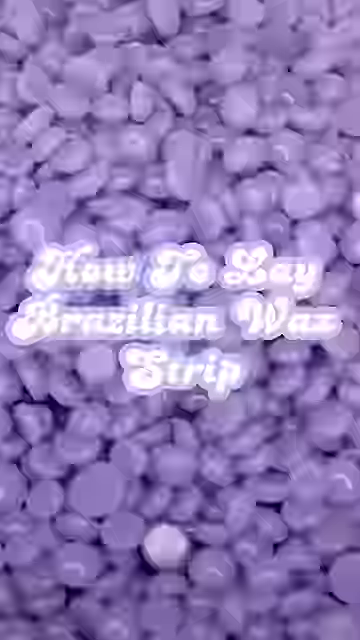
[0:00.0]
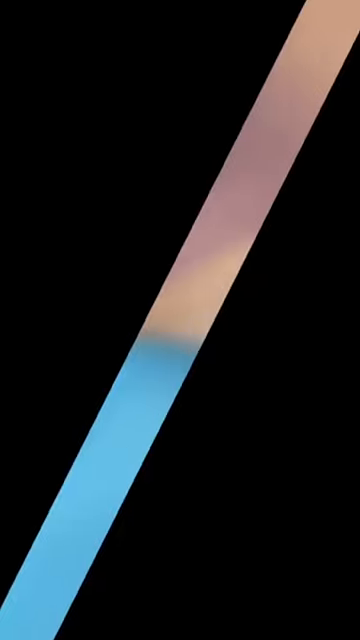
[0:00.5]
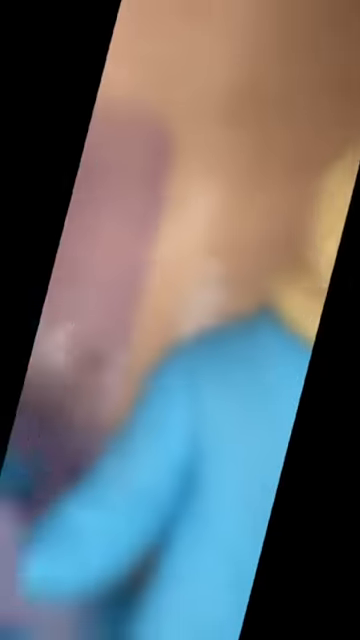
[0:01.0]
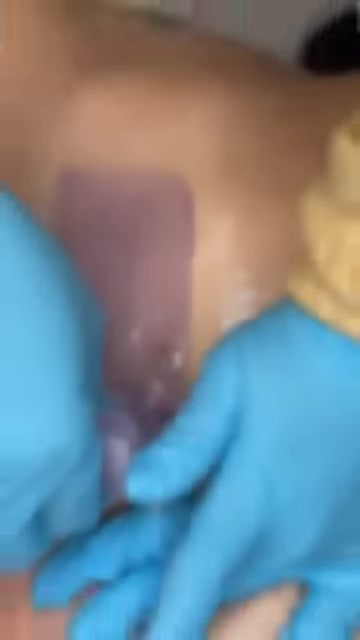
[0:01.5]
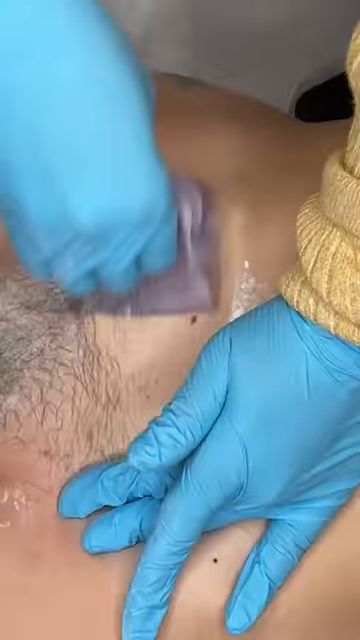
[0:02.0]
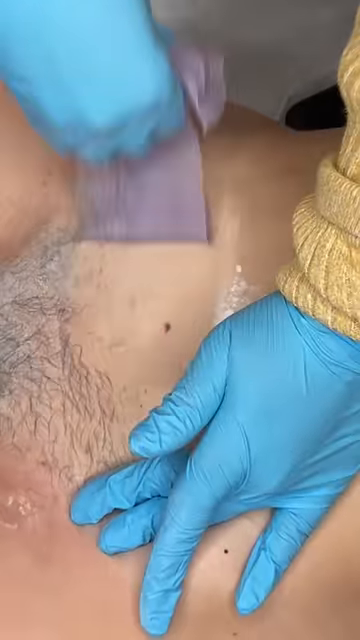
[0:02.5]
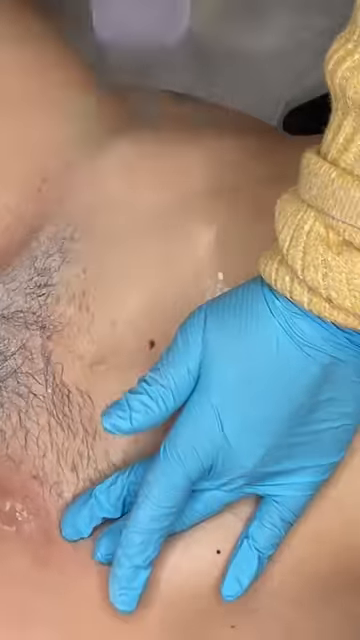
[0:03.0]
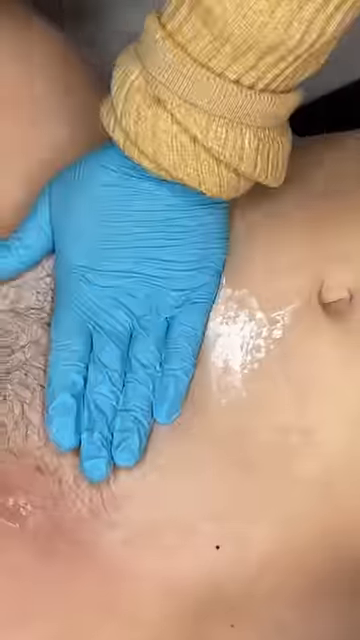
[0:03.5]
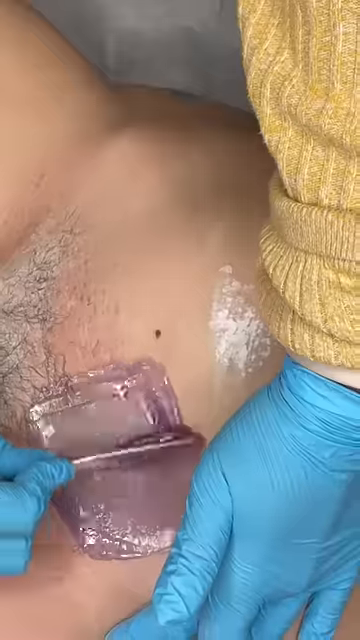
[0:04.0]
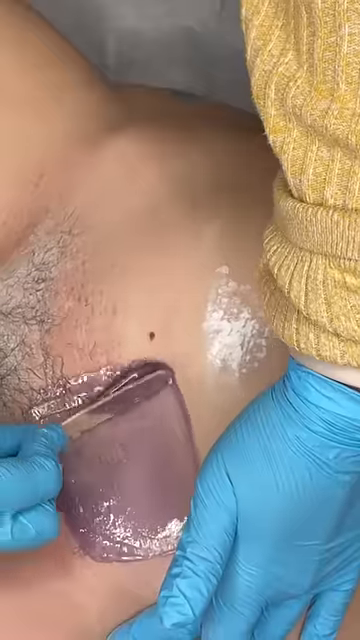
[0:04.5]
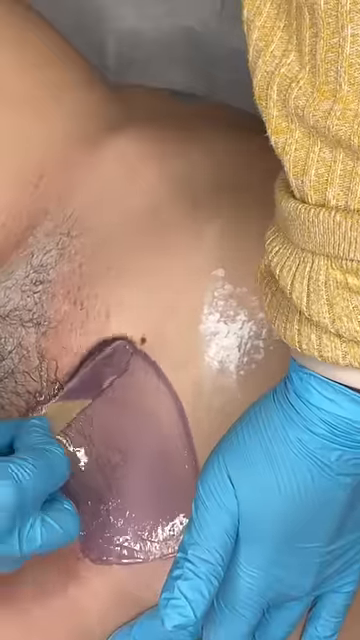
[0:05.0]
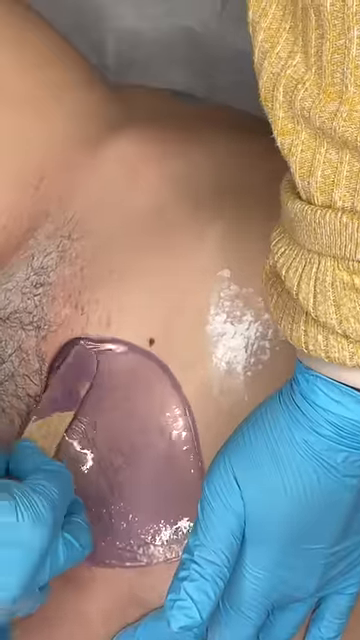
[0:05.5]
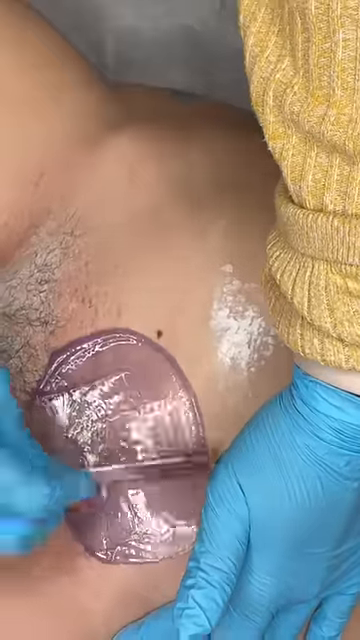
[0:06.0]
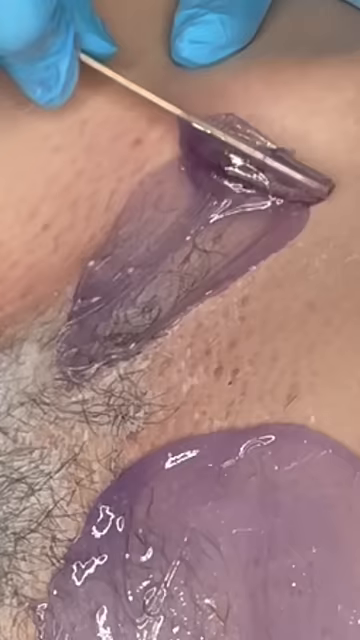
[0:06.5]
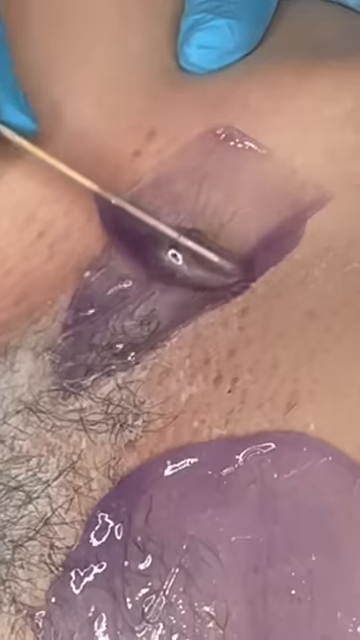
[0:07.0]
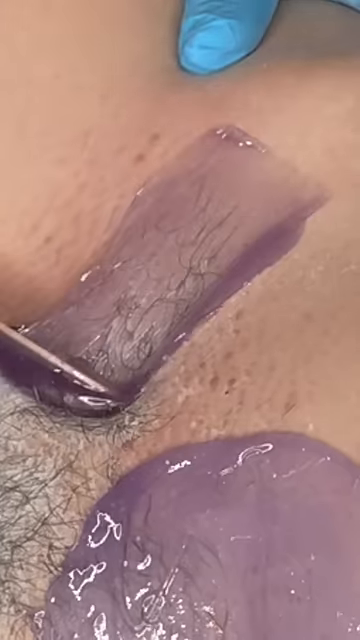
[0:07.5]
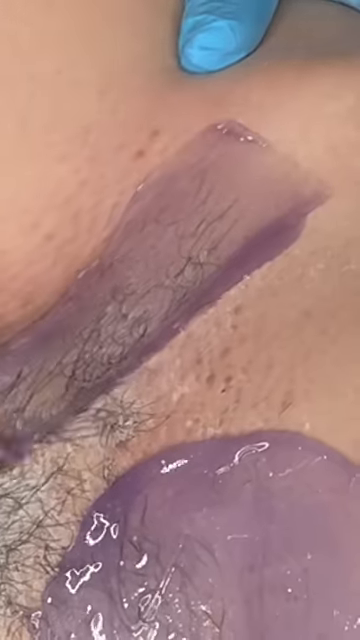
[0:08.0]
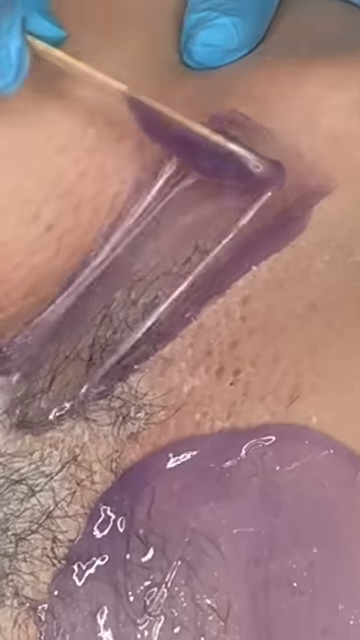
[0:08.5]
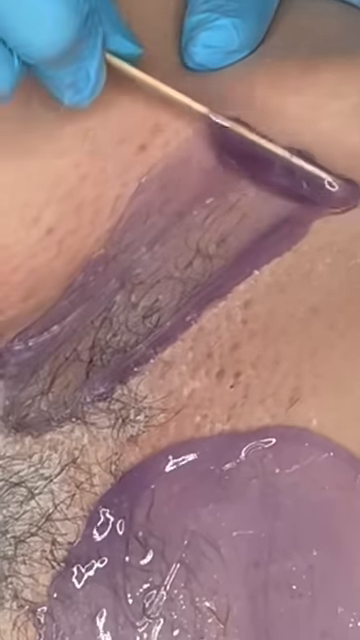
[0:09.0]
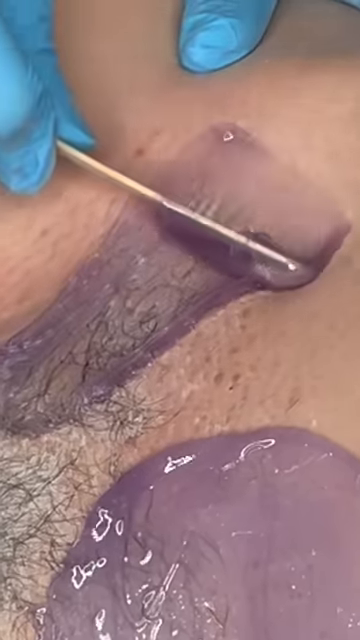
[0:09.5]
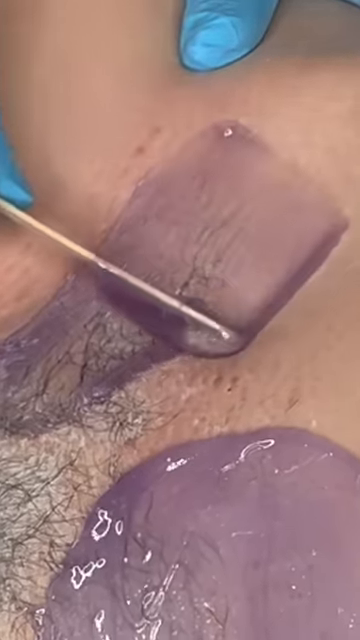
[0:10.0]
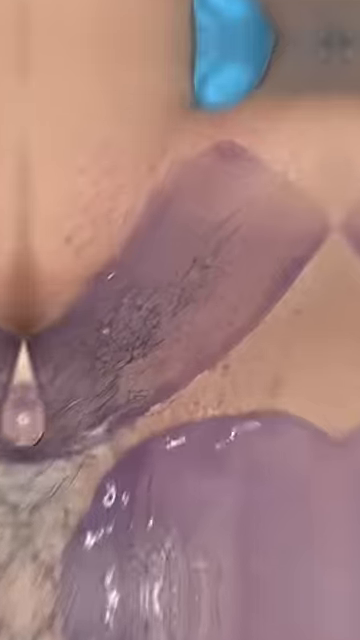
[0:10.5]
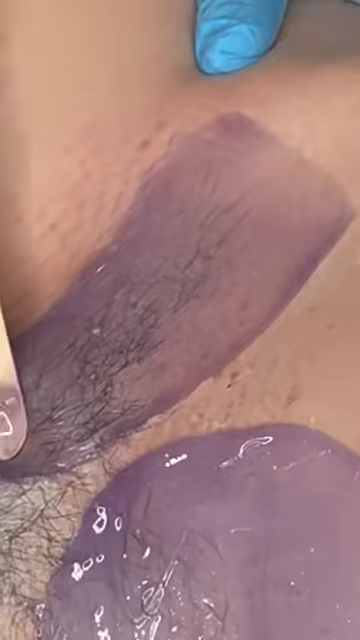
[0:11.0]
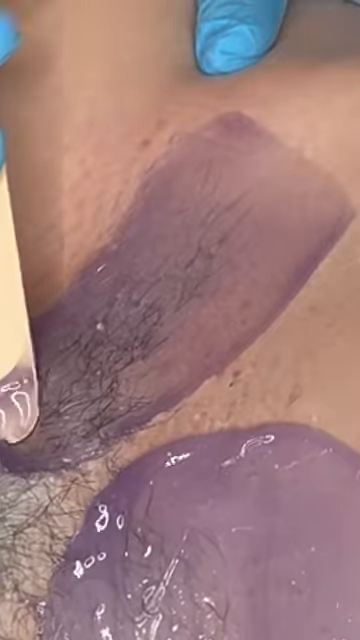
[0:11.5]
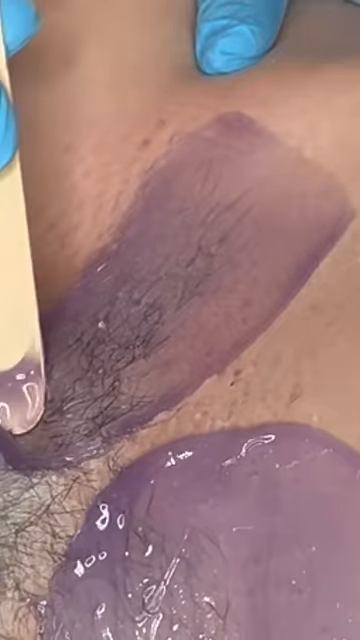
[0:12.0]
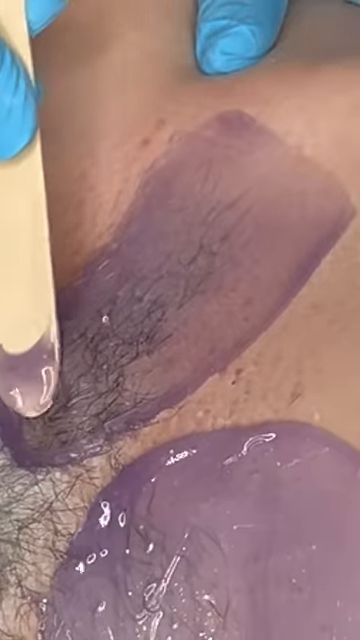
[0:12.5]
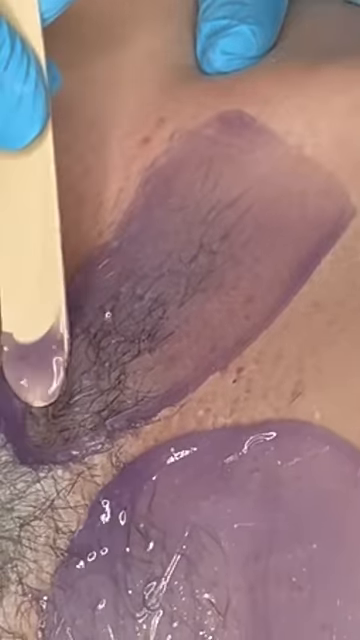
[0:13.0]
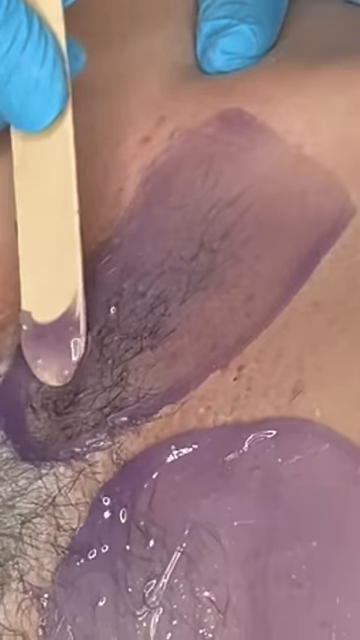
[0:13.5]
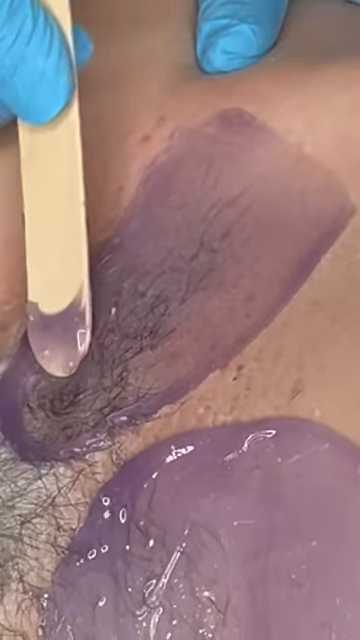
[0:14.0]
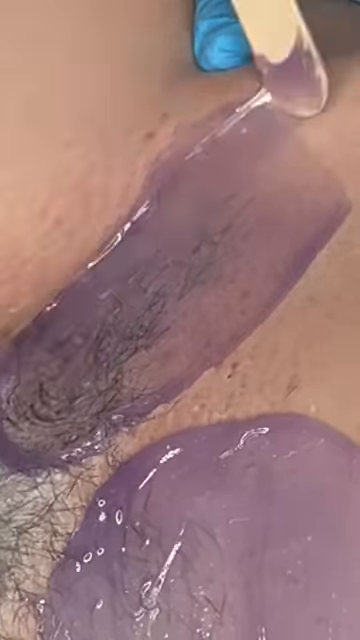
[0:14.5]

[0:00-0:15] The opening shows the person doing the wax, who appears to be wearing a yellow sweater. It looks like someone is getting a wax of her private area. The top of the private area and the hair are visible, and purple wax is spread onto it and ripped off. The person doing the wax wears bright blue gloves and uses a tongue depressor or wooden implement to spread the wax around, then uses some sort of purple bandage-type thing, or possibly the dried wax itself, to pull it off the skin. The waxer does not look like a professional, though they may be one, and they mainly wax the hair at the top of the private area.